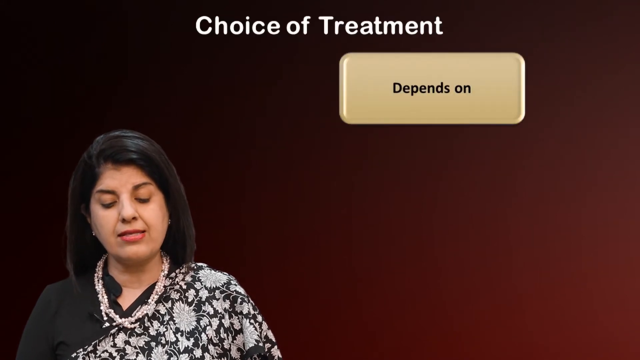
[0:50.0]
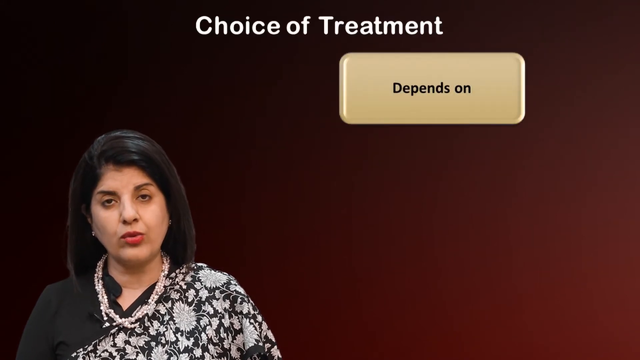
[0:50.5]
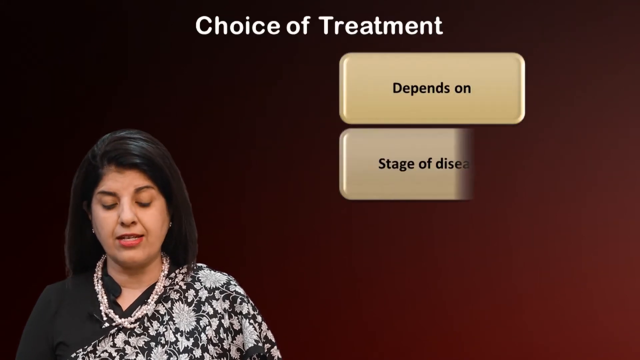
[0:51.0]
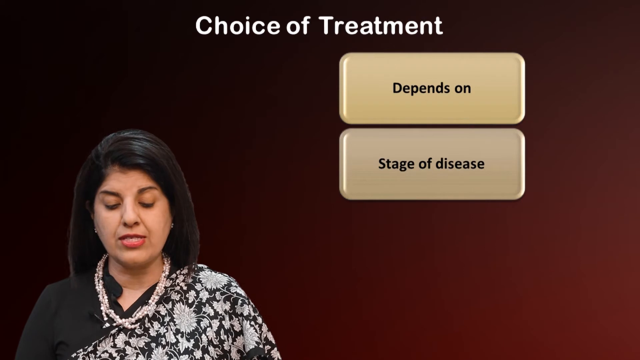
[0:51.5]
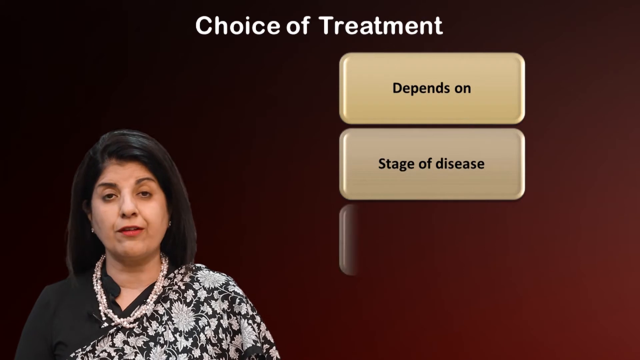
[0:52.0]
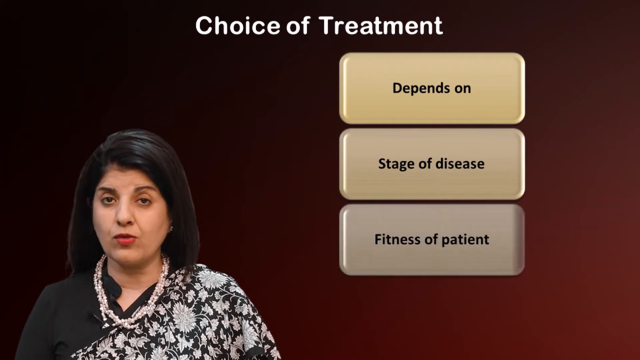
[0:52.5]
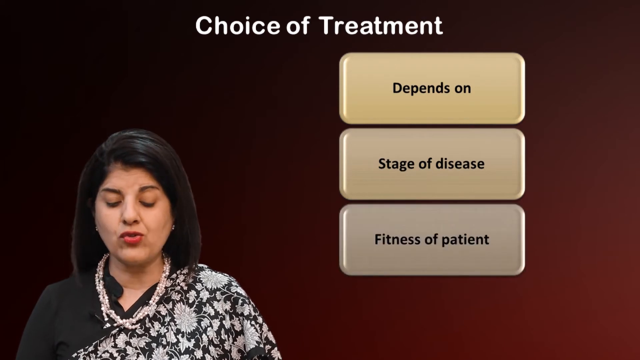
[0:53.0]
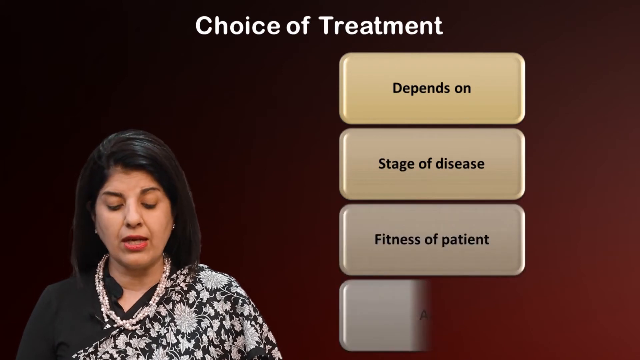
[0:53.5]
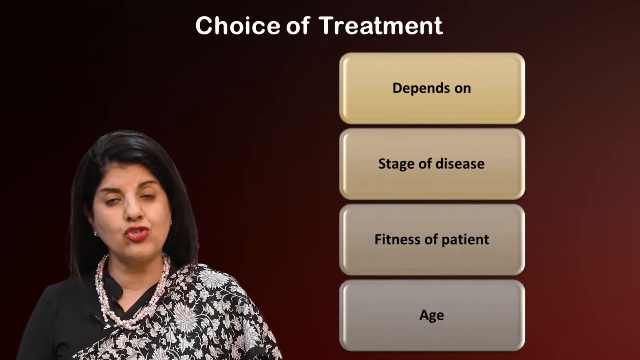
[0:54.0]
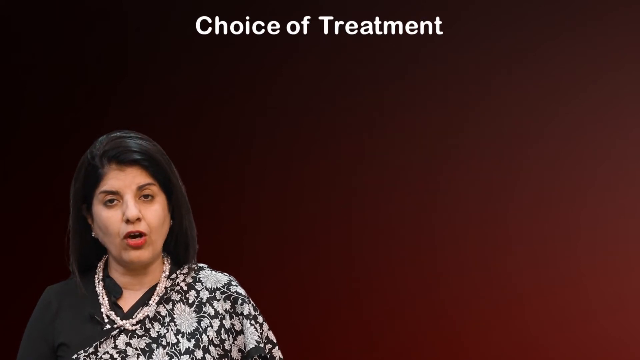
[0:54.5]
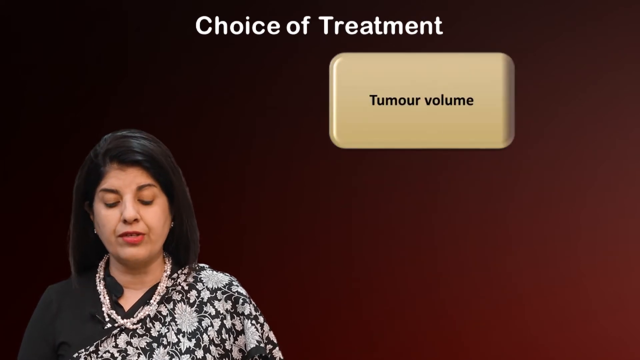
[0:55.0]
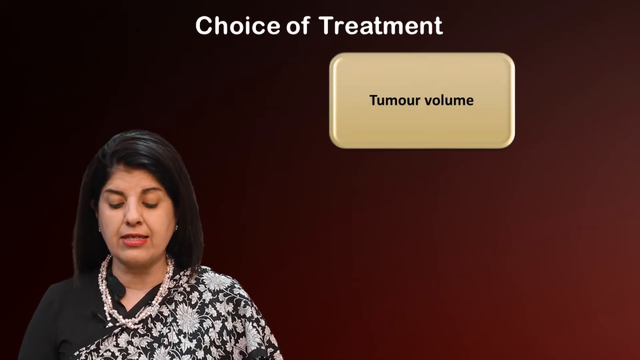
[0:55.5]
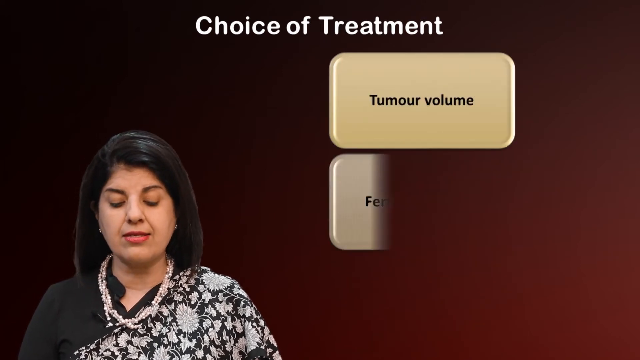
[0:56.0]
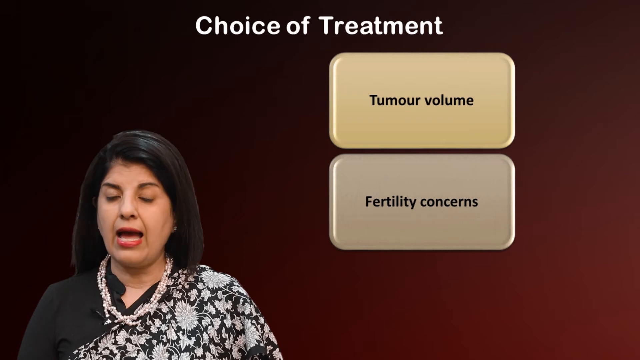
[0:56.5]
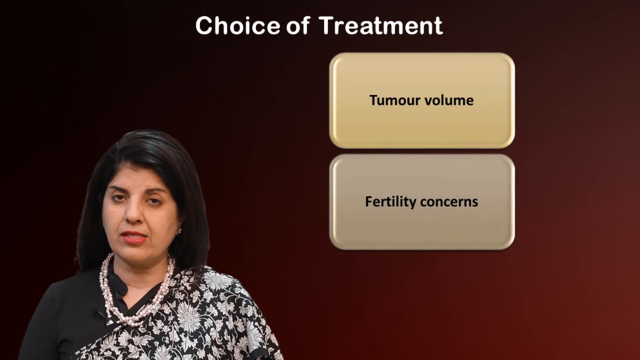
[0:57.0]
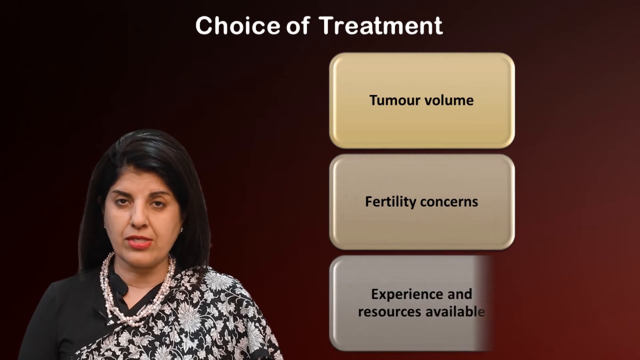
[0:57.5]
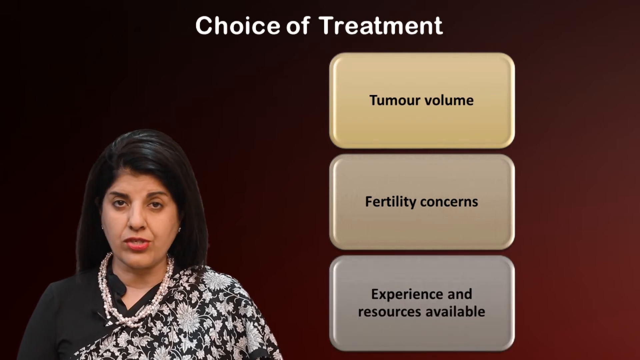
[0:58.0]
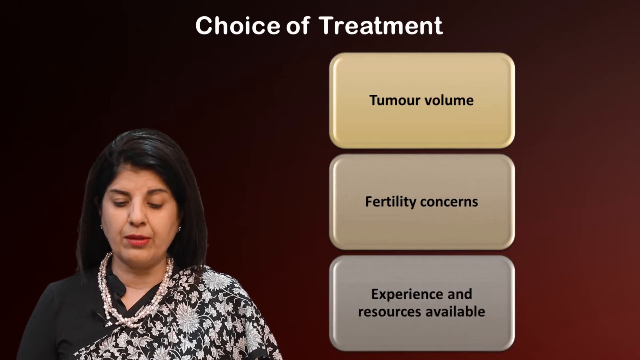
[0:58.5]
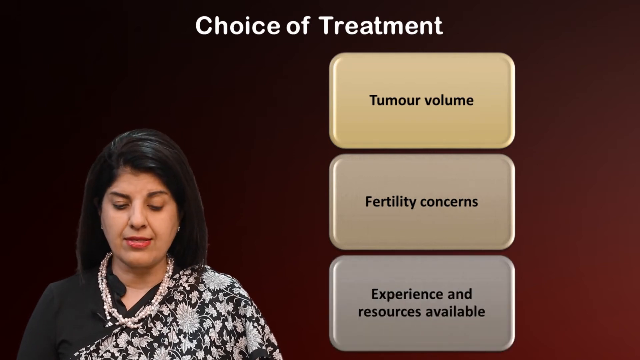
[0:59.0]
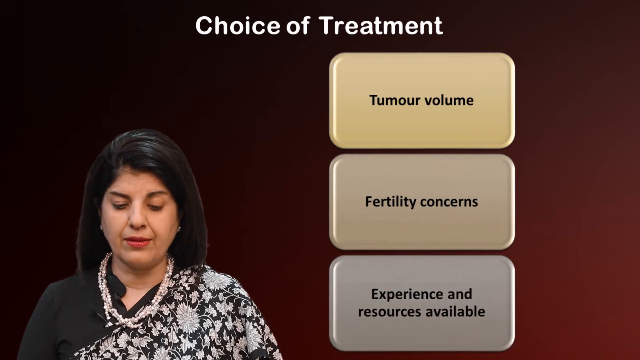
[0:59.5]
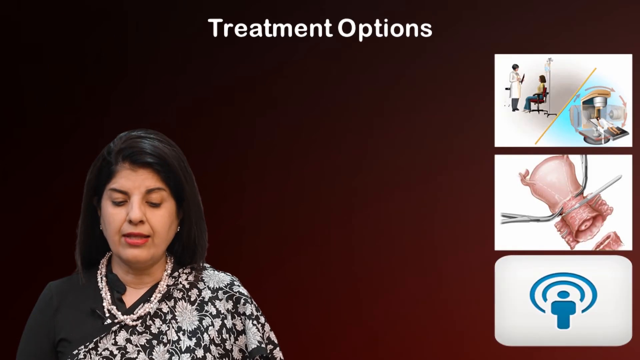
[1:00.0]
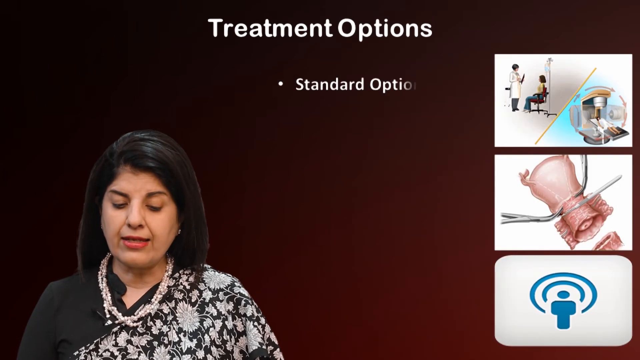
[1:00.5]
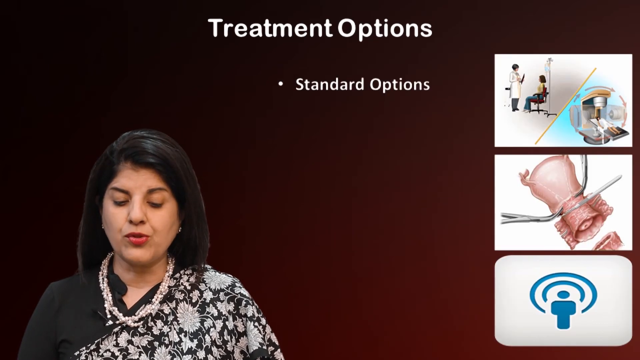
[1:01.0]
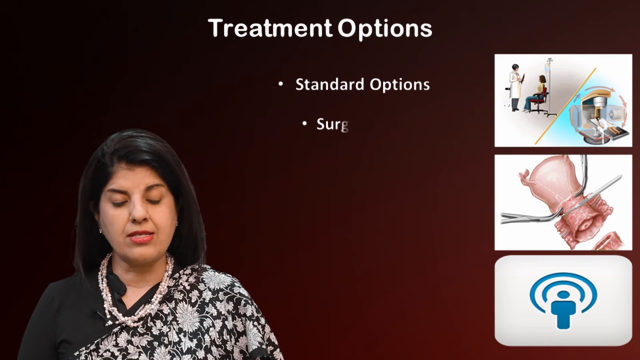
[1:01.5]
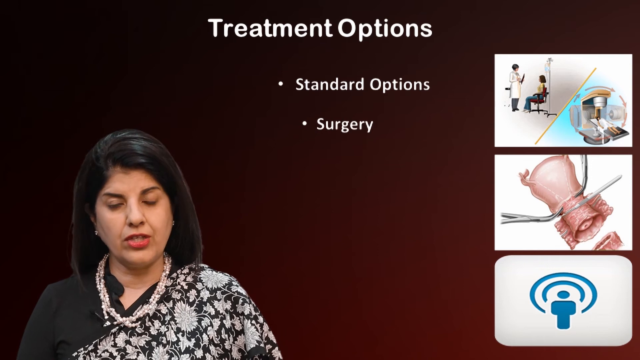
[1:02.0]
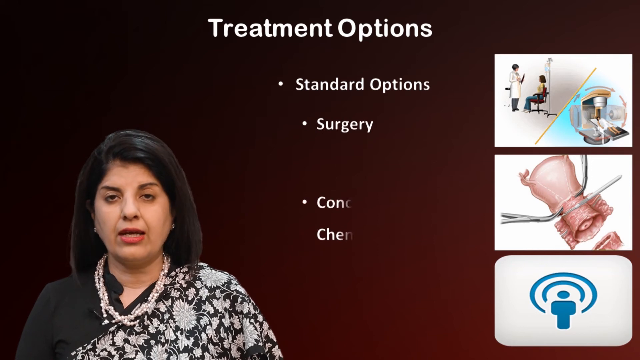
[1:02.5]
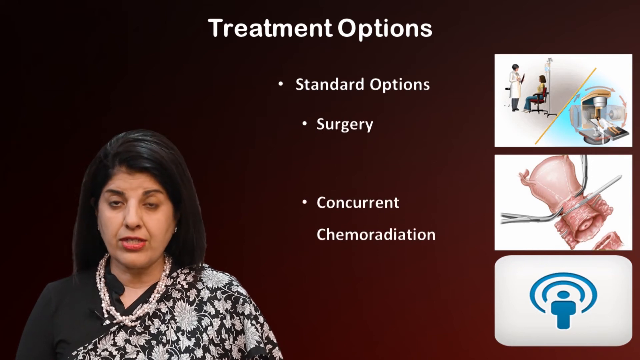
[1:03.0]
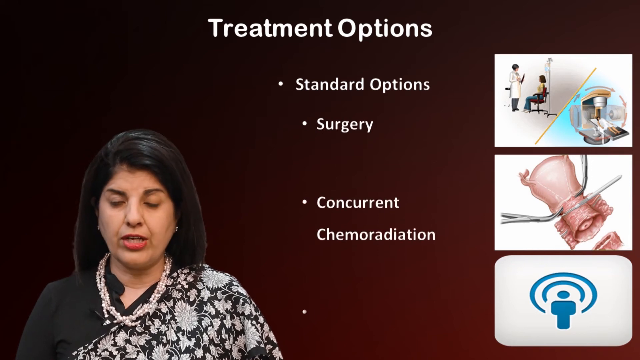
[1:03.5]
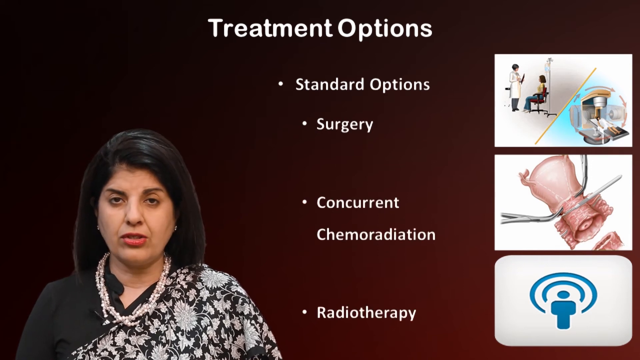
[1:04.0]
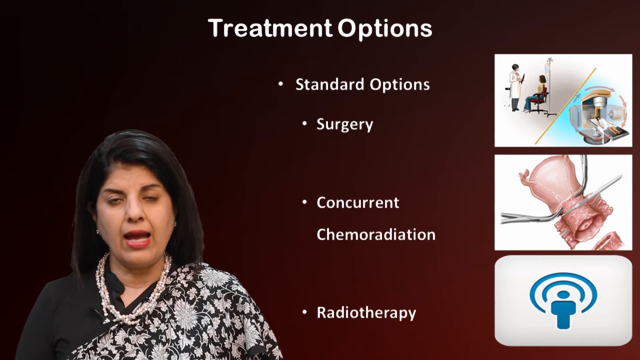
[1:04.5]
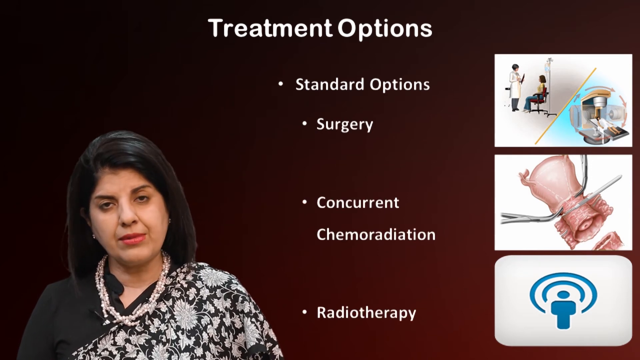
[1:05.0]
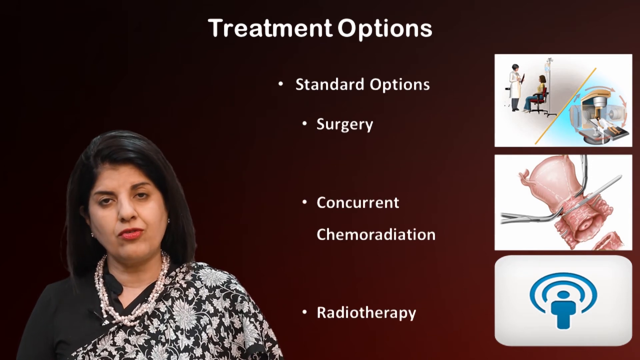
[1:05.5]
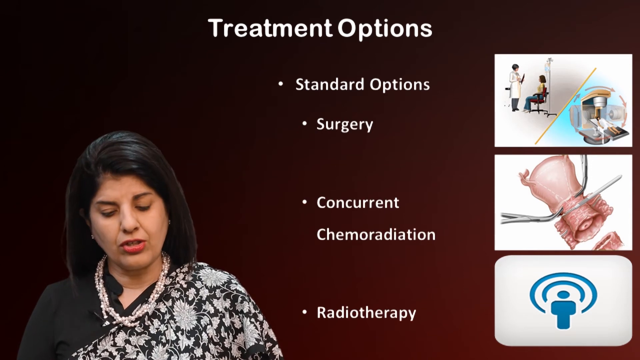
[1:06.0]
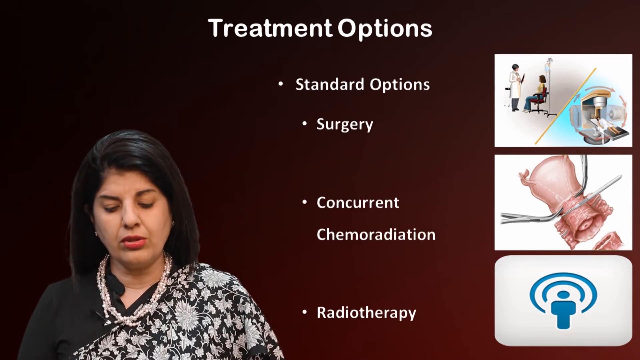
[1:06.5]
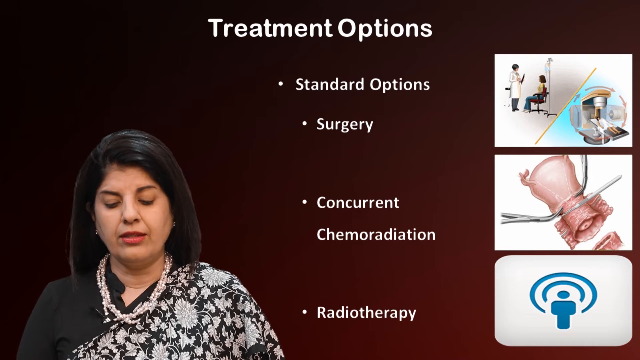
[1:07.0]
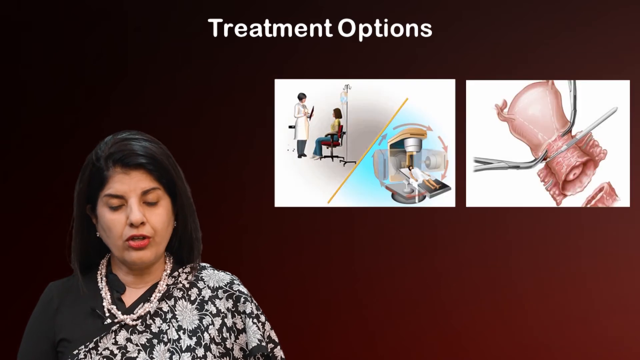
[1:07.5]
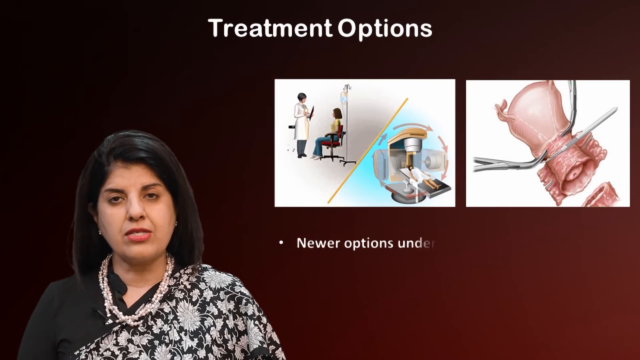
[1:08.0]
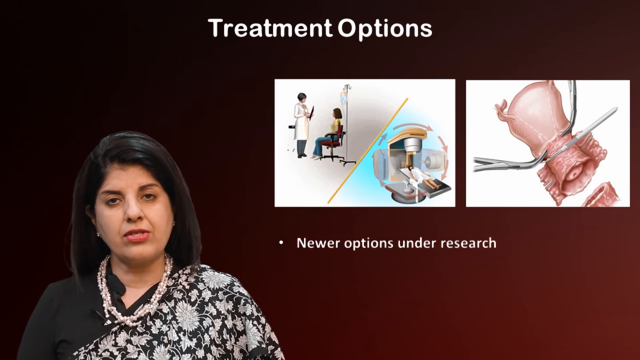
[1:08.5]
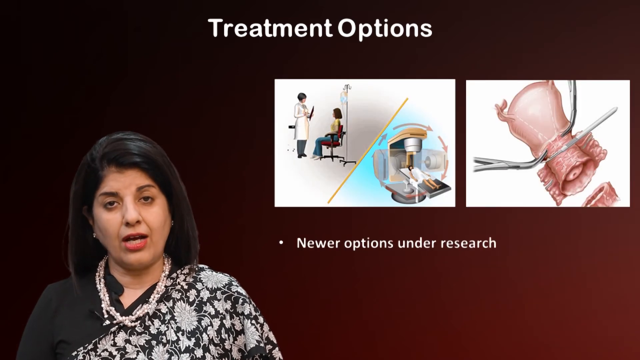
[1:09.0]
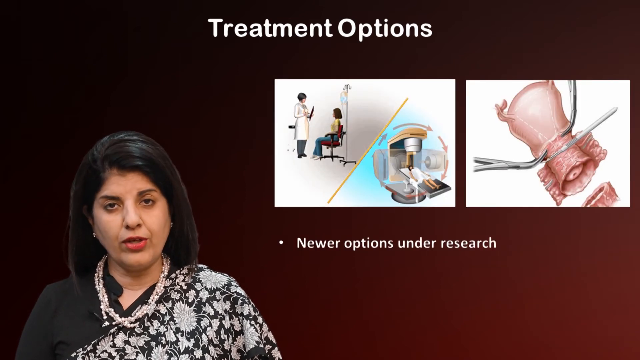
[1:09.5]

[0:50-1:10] The screen returns to "management of cervical cancer" and moves on to the next page, where bold white text reads "choice of treatment". It lists what the choice depends on: the stage, the tumor volume, fertility concerns and experience. The screen then moves over to treatment options, listing the standard options: surgery, or the other possibility, chemo radiation. The video then goes back to the woman on the left side of the screen.